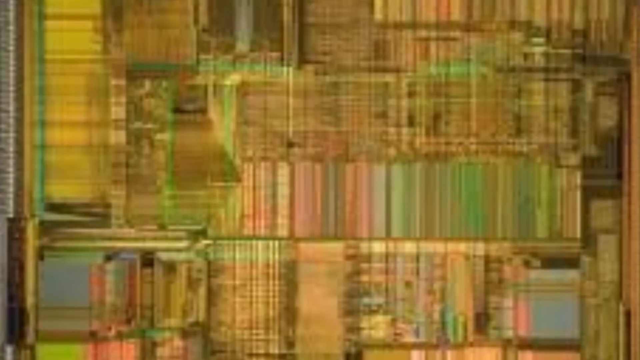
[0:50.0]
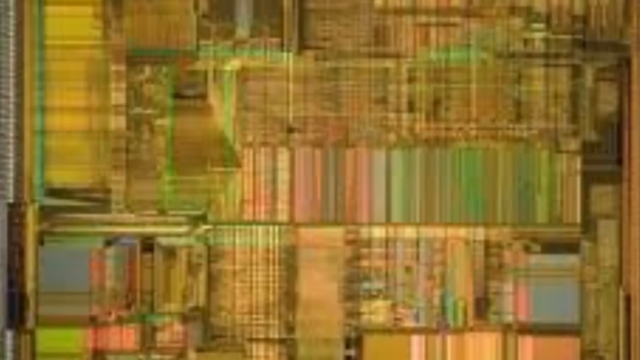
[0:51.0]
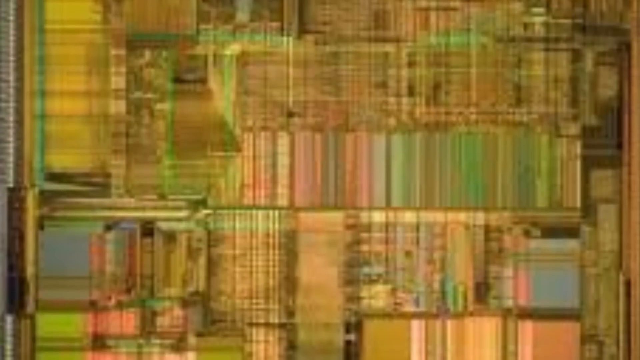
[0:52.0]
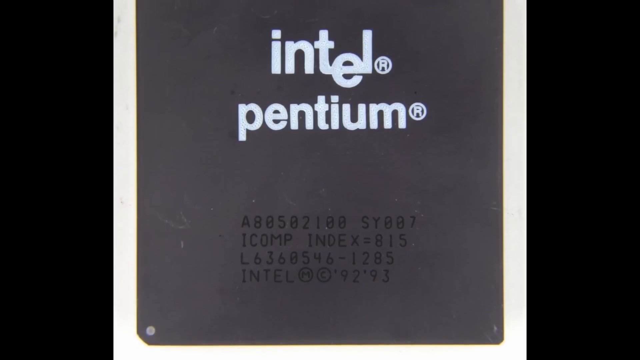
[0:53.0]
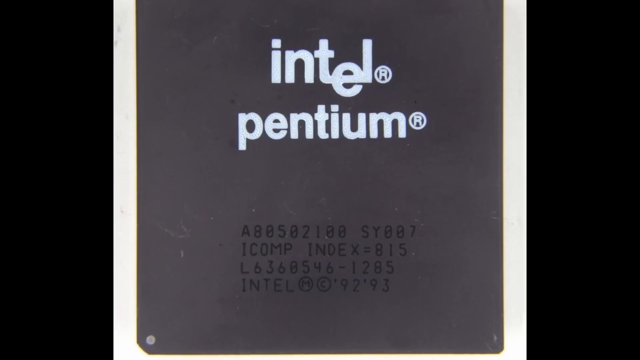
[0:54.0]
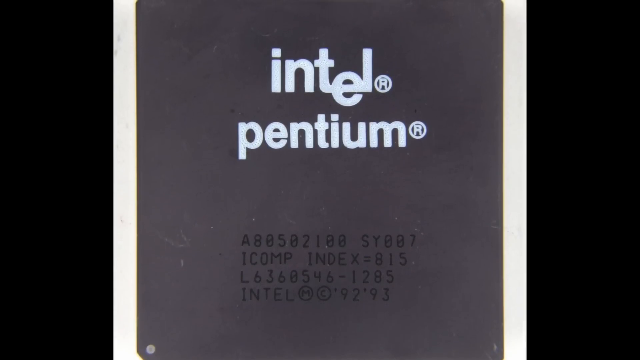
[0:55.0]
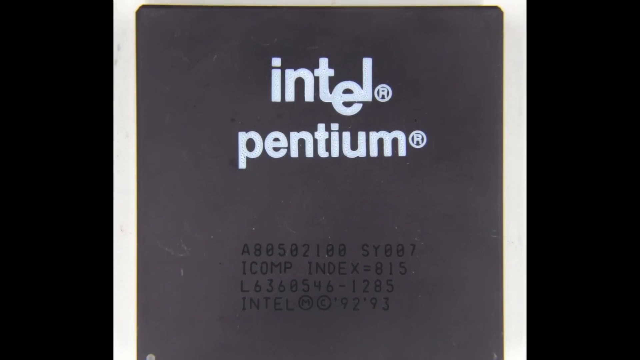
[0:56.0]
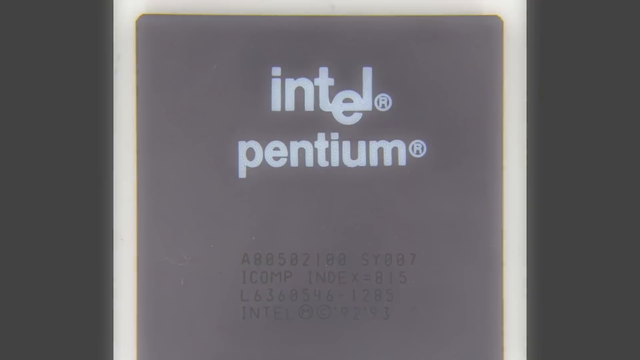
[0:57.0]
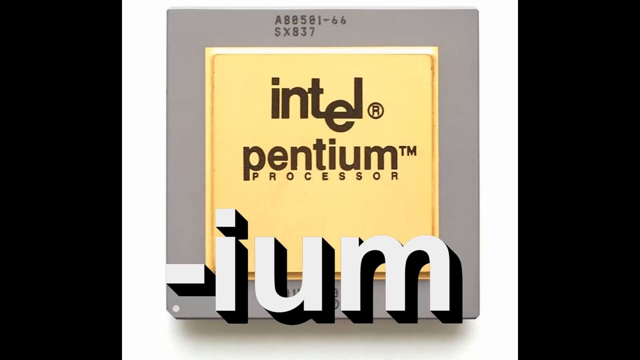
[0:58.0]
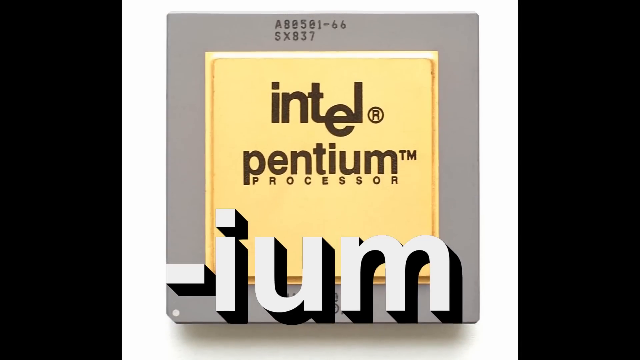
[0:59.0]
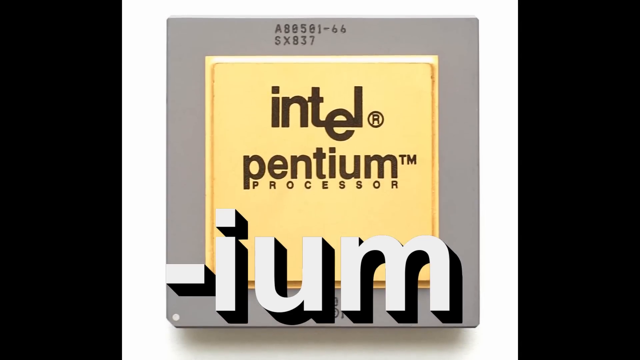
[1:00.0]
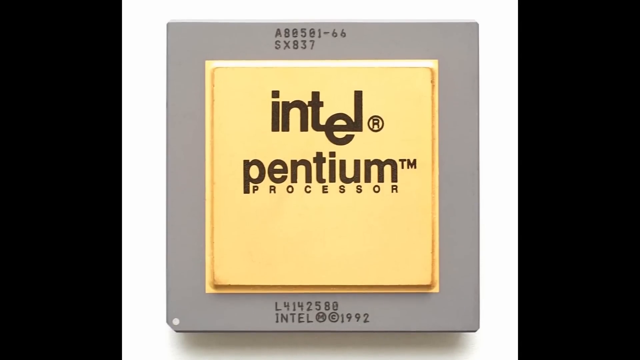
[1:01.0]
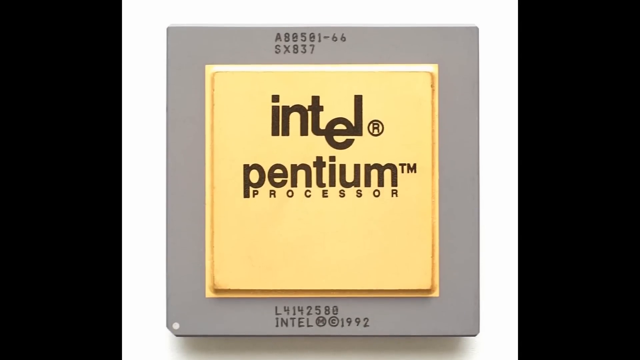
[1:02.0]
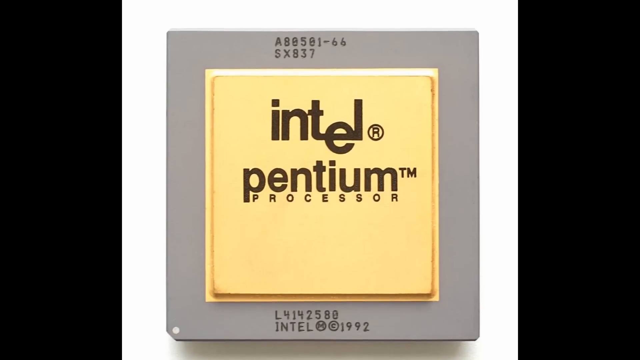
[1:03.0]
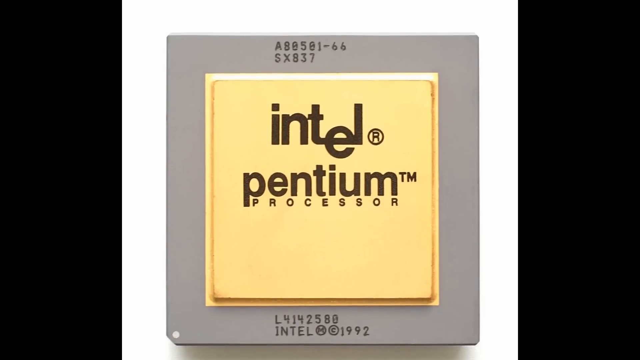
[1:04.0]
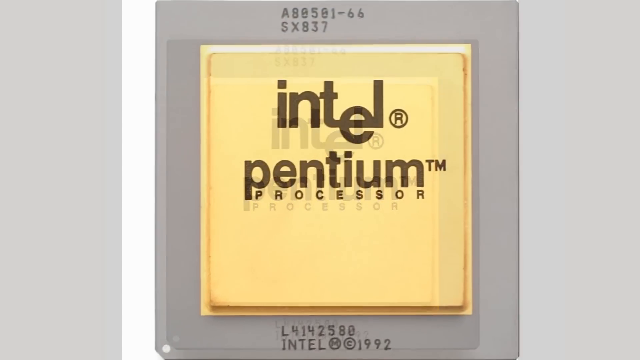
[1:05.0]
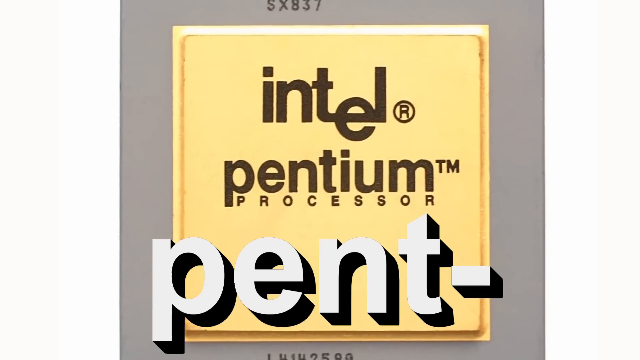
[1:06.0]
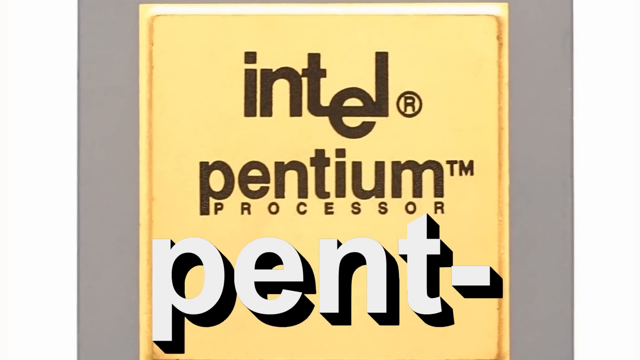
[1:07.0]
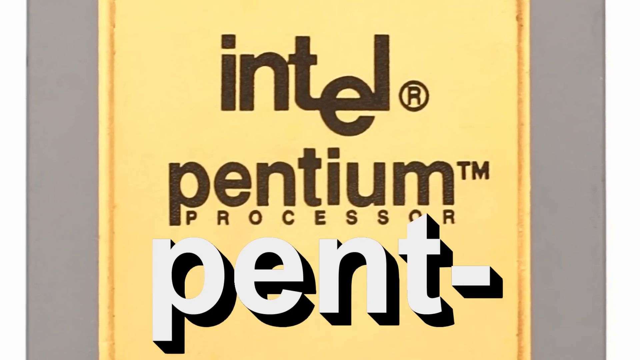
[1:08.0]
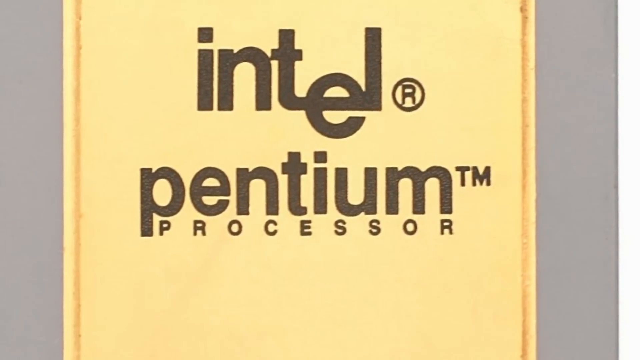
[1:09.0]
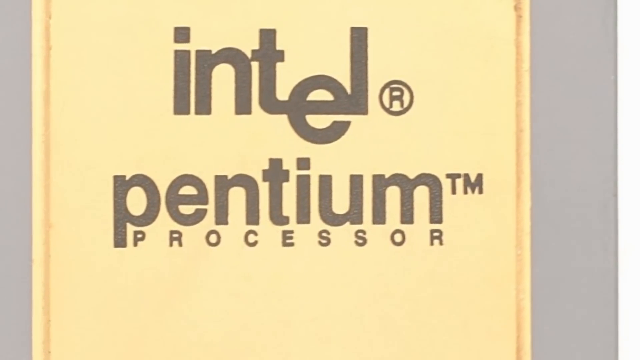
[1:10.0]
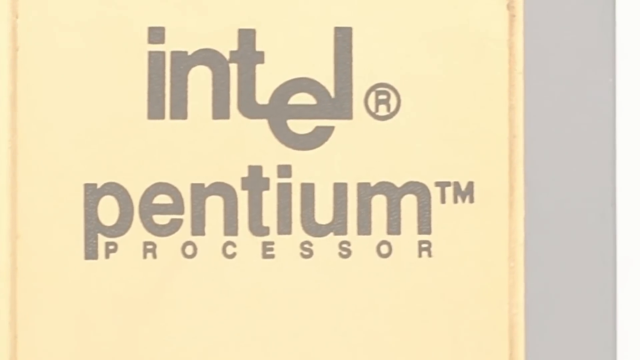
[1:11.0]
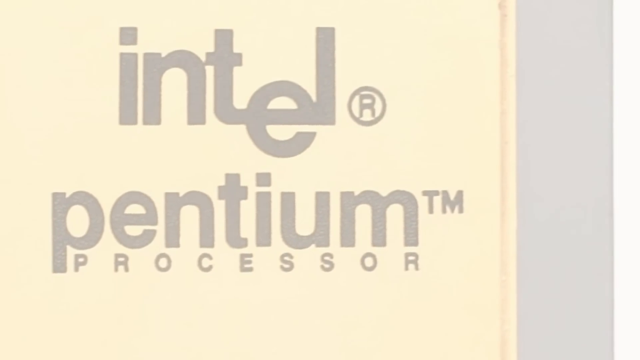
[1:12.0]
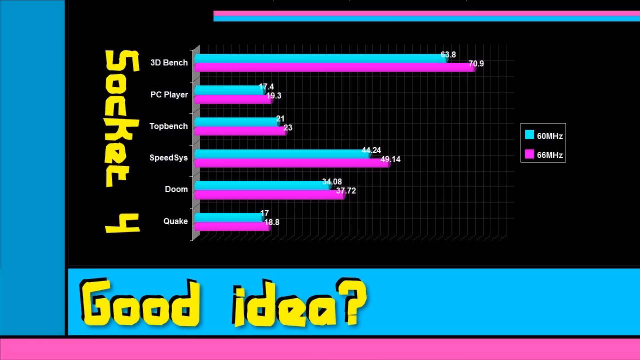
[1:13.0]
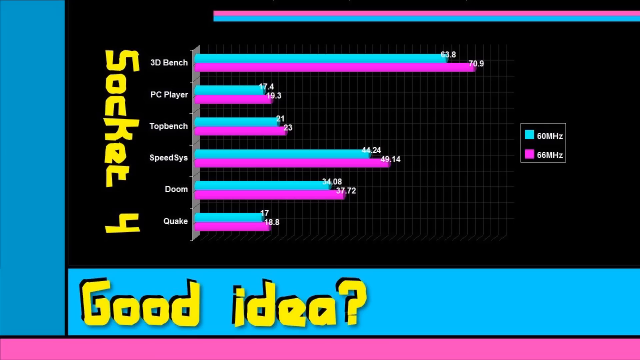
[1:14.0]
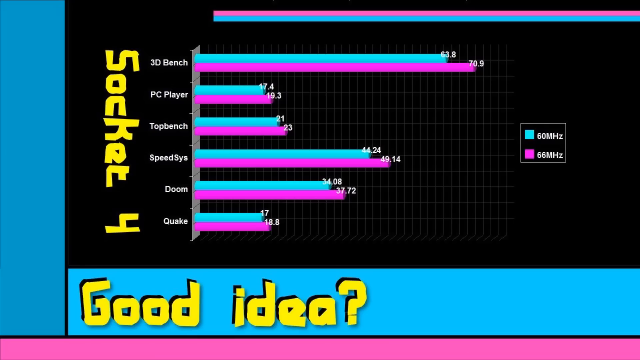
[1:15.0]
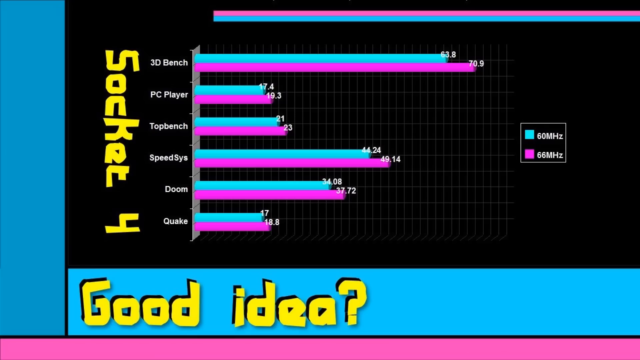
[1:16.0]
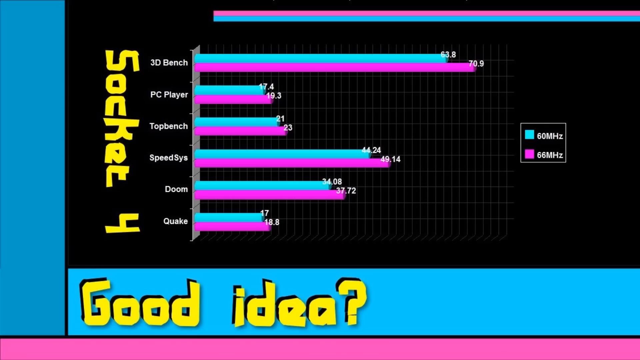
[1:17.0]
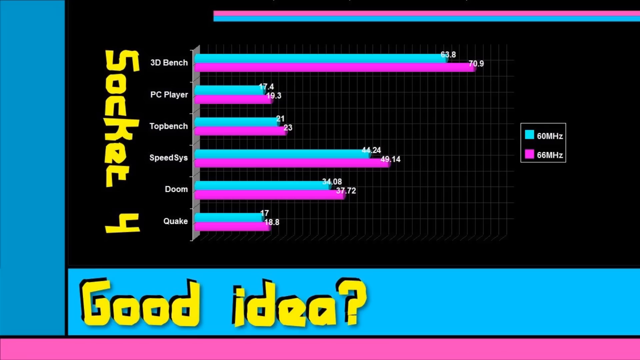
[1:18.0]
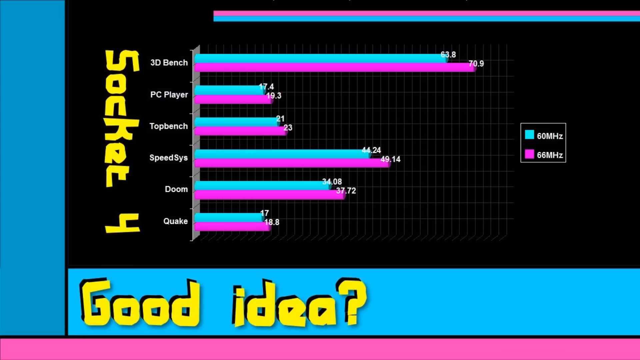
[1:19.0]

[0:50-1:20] A background that is hard to make out almost looks like books on a bookshelf, so blurry that it is hard to see where they end. The colors are beige, with light pinks, light greens, light blues and light yellows sort of mixed throughout. The silver square outlined in white that says "Intel Pentium" appears, with a number on the bottom that includes "A80502100 SY007," "comp index=815" and "L636054-1285." Another Intel Pentium processor square follows, this one with text photoshopped over it: a dash and then "IUM." Then the same square appears on a white background, with the word "Pent-" photoshopped over it in white with a black shadow behind it. A bar graph then appears, with "socket 4" on one side and "good idea?" at the bottom.